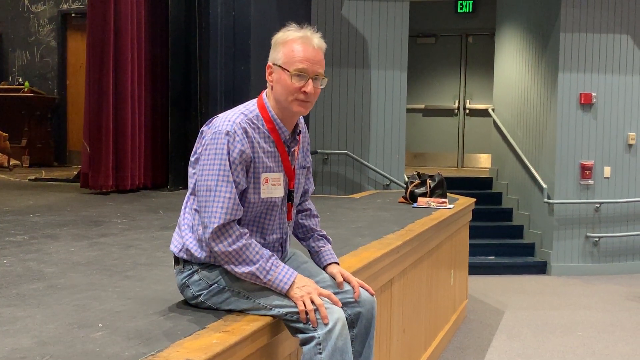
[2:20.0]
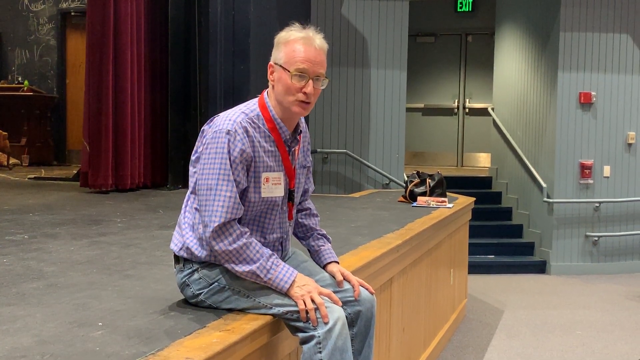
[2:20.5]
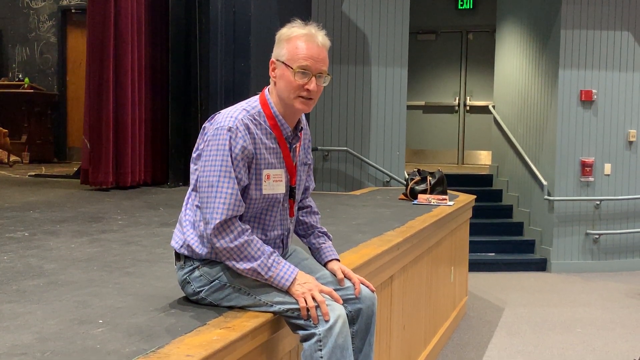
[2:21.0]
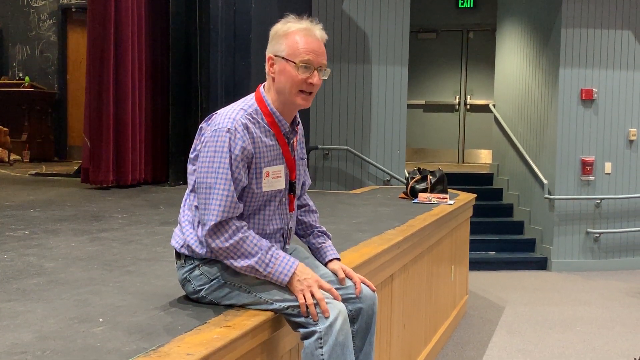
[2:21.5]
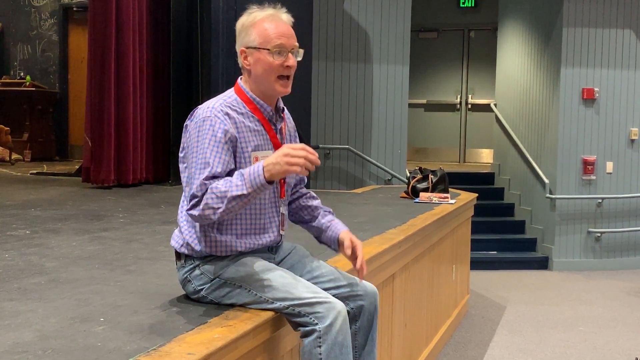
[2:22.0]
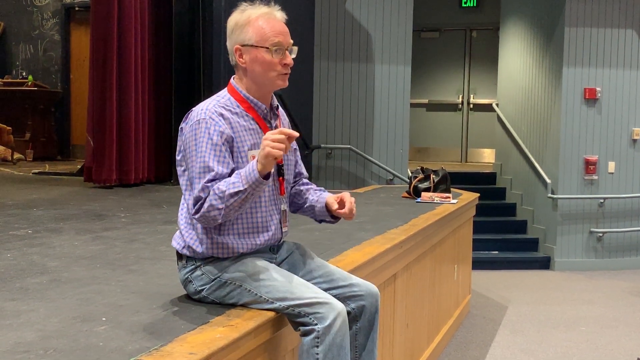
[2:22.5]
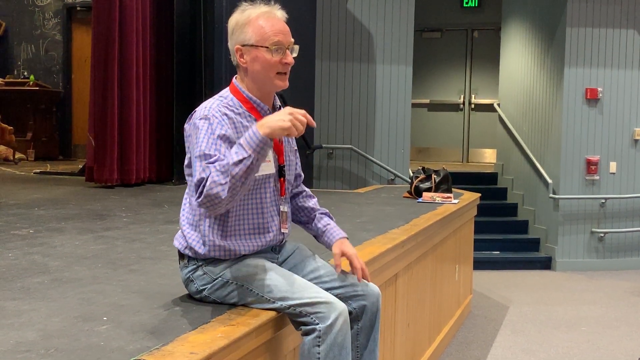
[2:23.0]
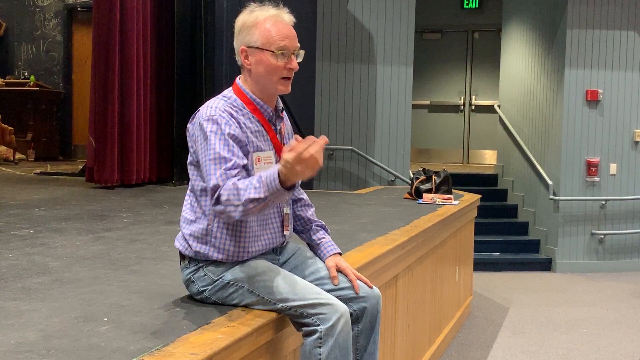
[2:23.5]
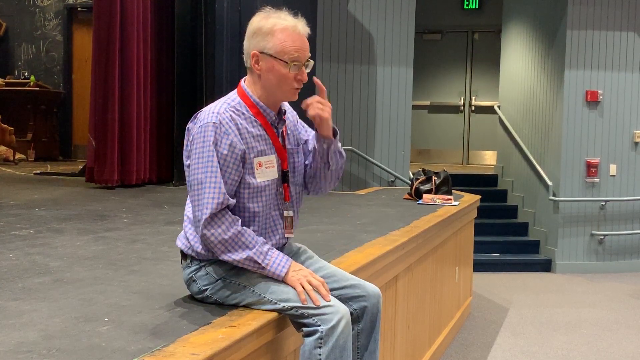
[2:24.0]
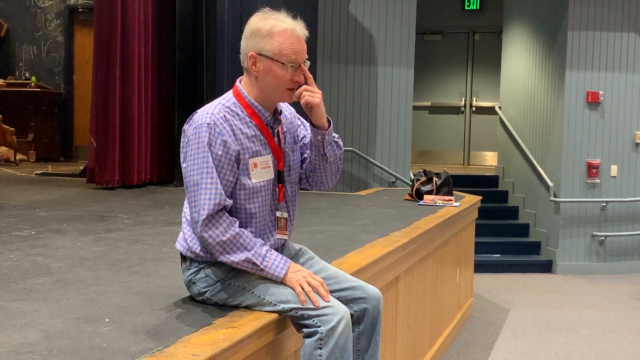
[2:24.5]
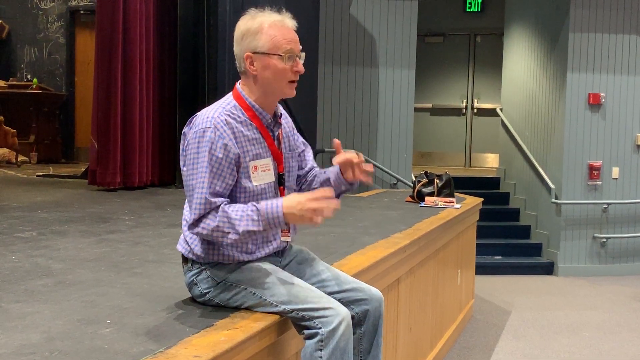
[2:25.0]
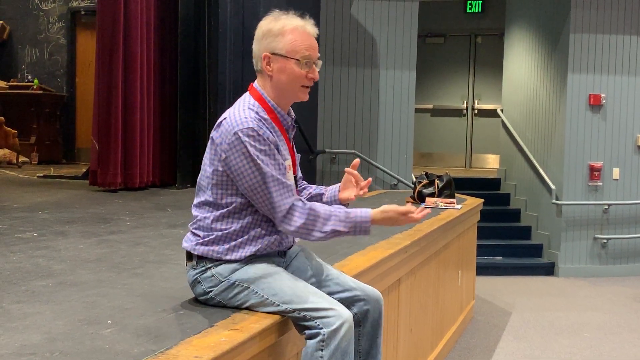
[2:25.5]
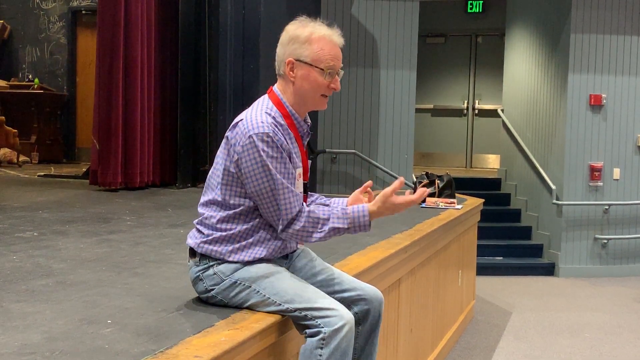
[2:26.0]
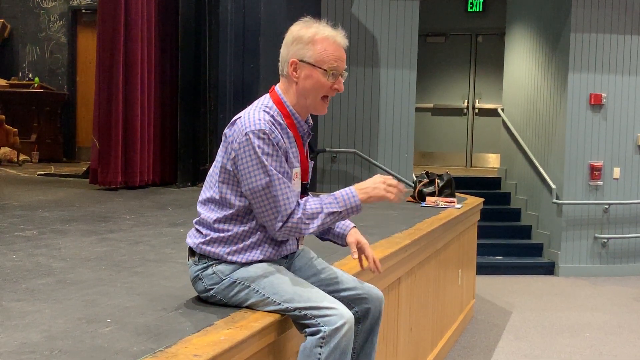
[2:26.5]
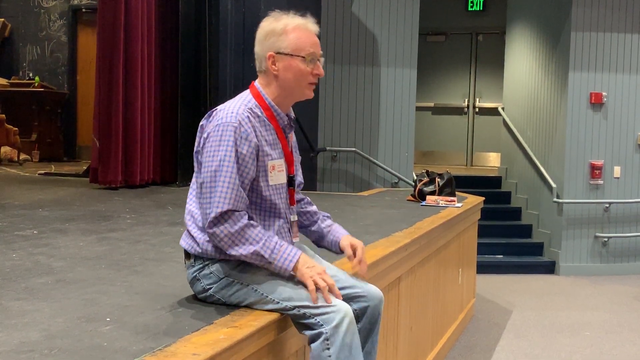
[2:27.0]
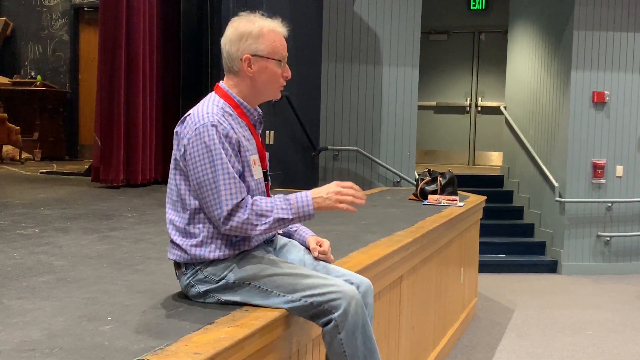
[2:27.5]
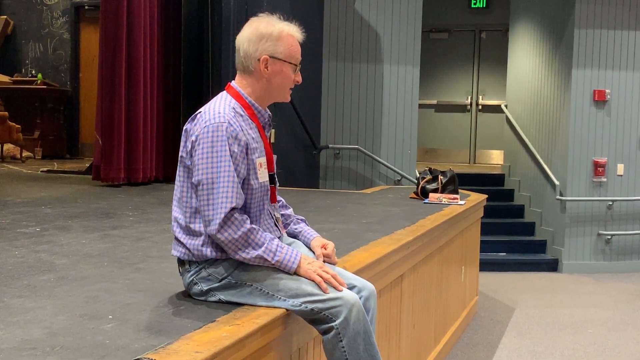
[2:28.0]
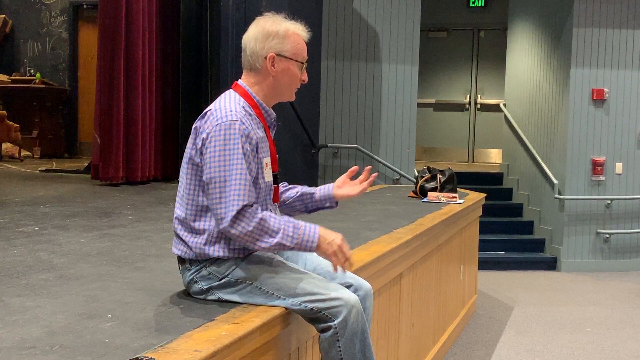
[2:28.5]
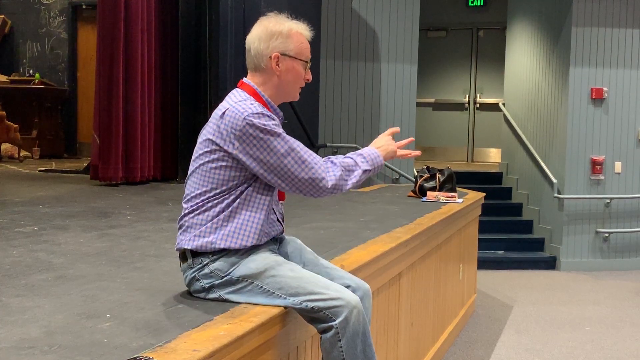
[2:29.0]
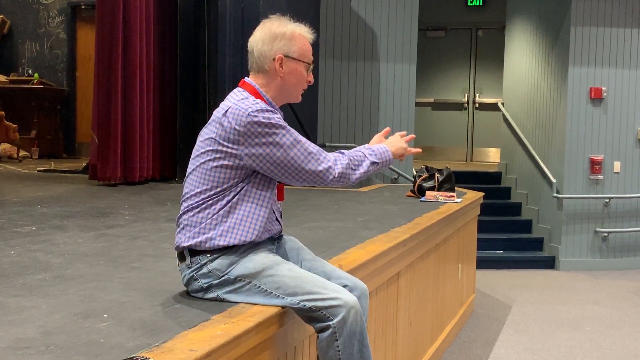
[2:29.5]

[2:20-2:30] A small group of Barnstable High seniors, probably about 20 kids, sit in an auditorium. A man sits on the end of the stage talking to them; he is apparently a visitor for the day, Mick Carlon, the author of Girl Singer. He has a visitor's sticker and a lanyard with no keys and no badge.